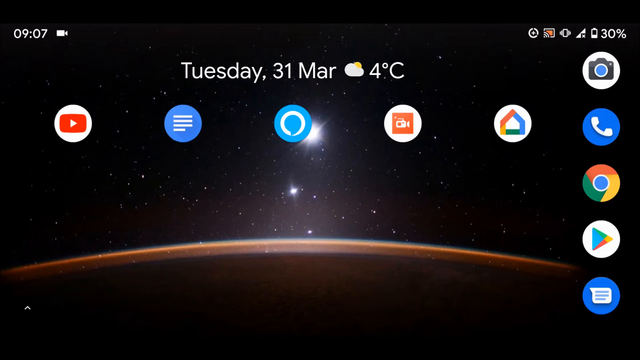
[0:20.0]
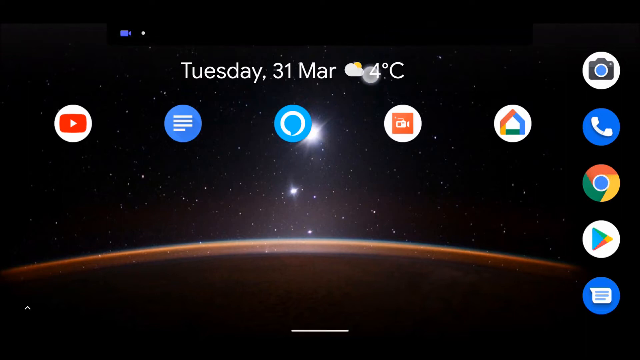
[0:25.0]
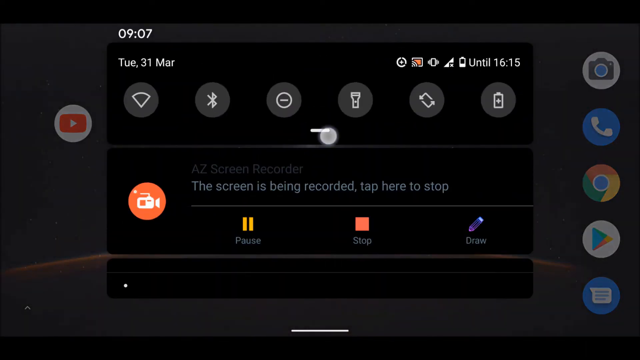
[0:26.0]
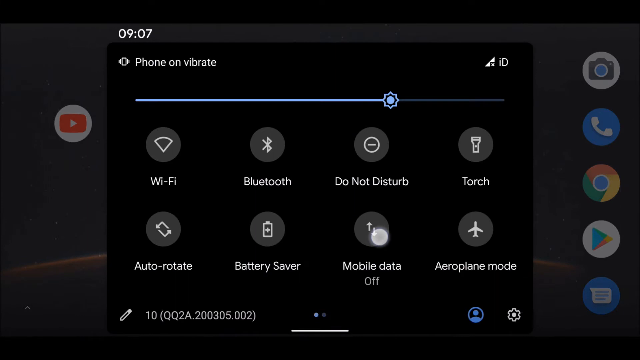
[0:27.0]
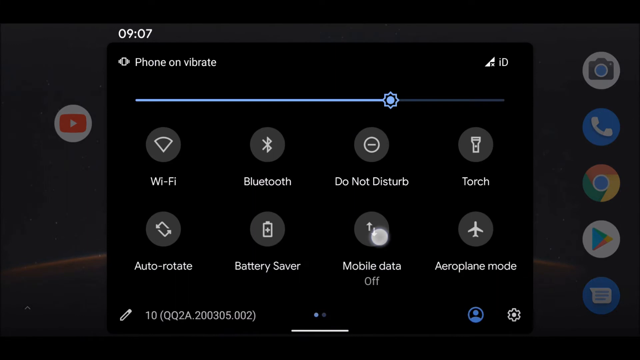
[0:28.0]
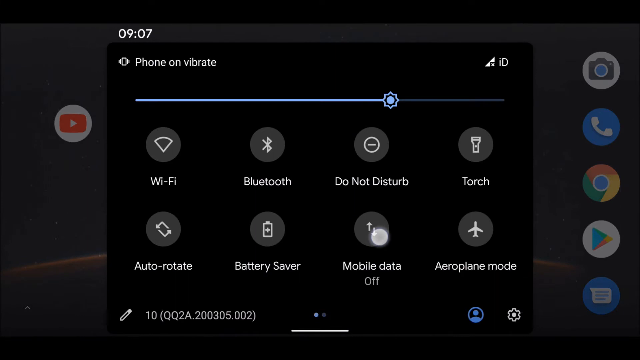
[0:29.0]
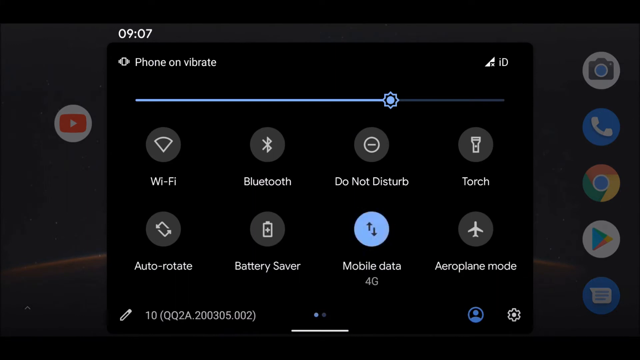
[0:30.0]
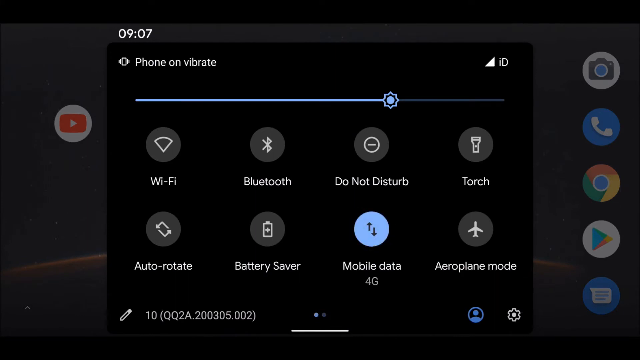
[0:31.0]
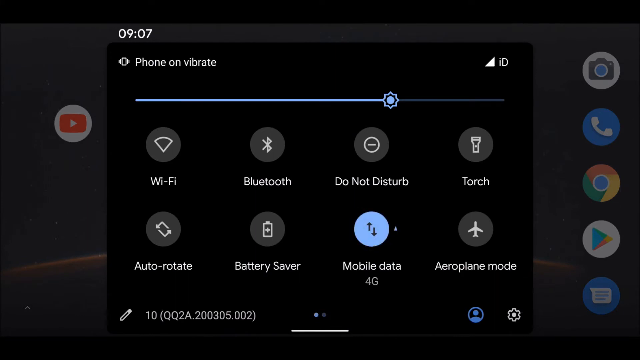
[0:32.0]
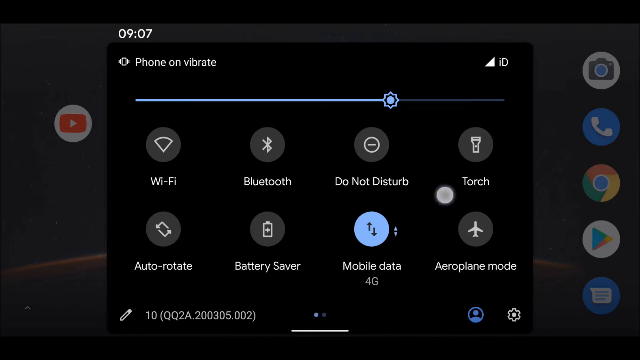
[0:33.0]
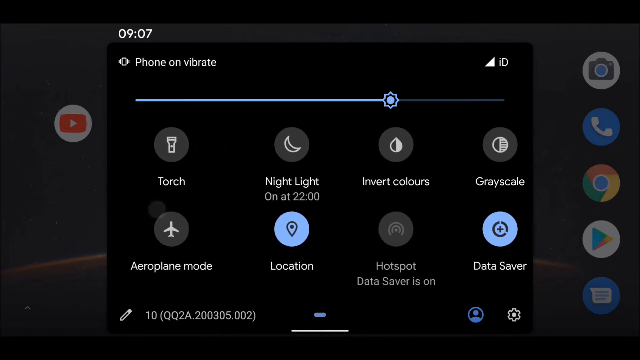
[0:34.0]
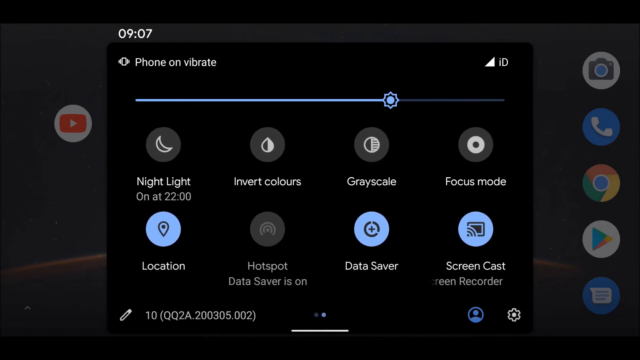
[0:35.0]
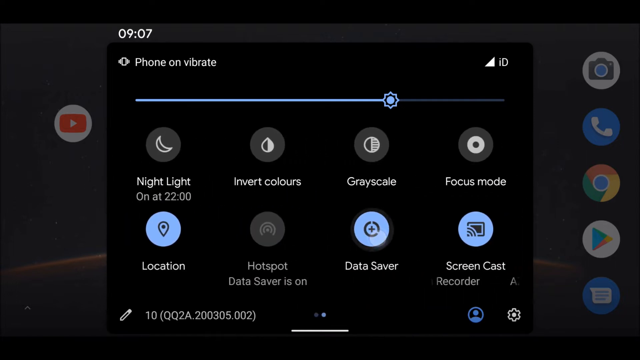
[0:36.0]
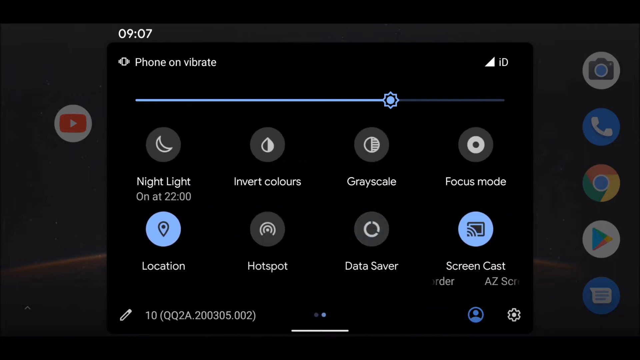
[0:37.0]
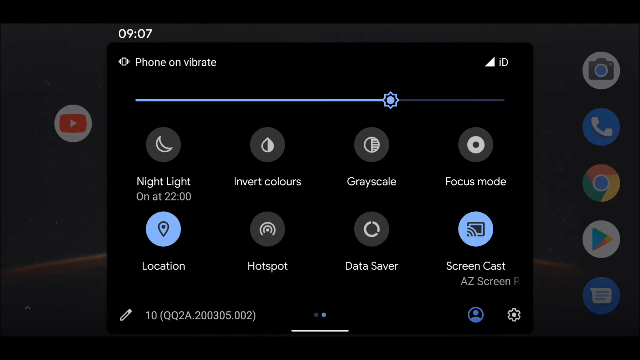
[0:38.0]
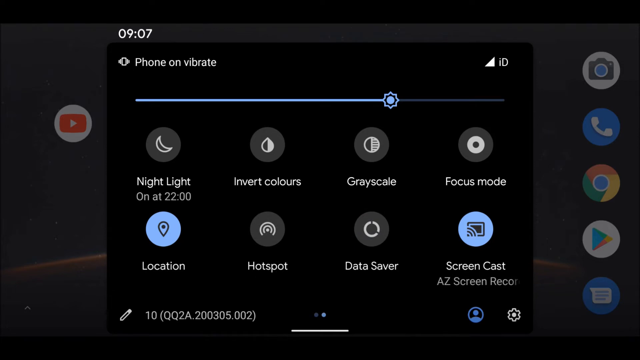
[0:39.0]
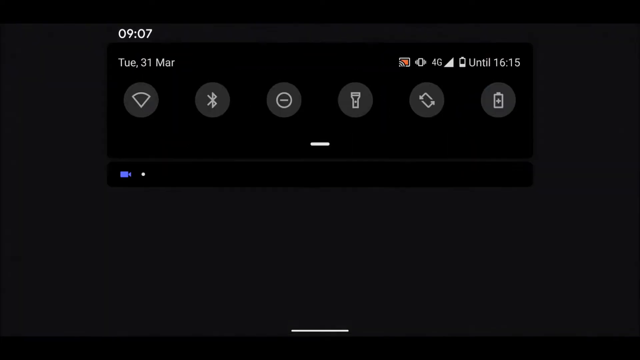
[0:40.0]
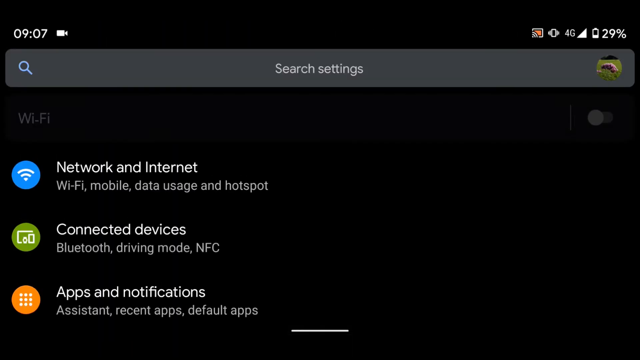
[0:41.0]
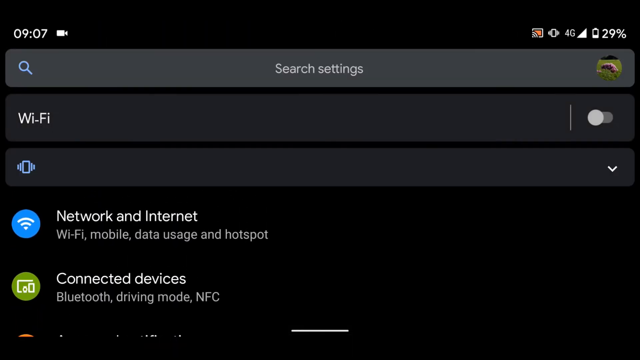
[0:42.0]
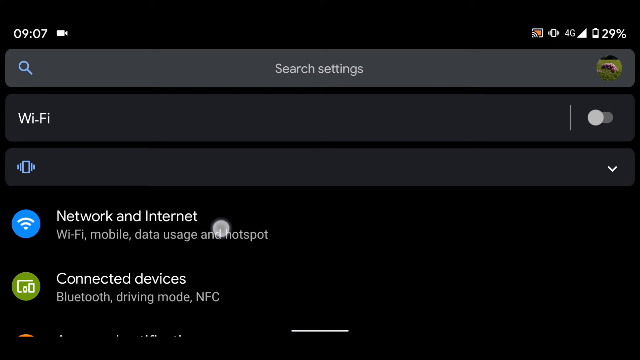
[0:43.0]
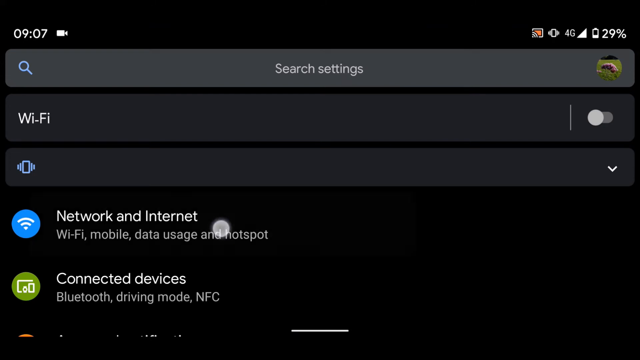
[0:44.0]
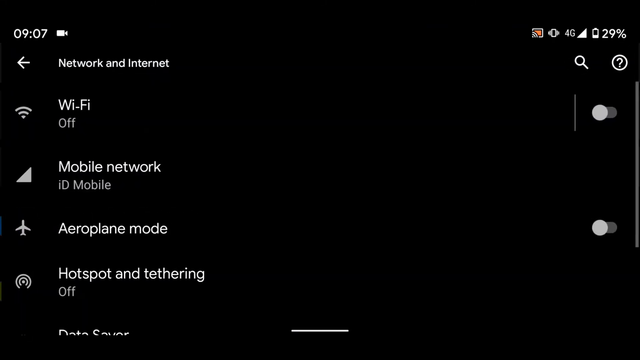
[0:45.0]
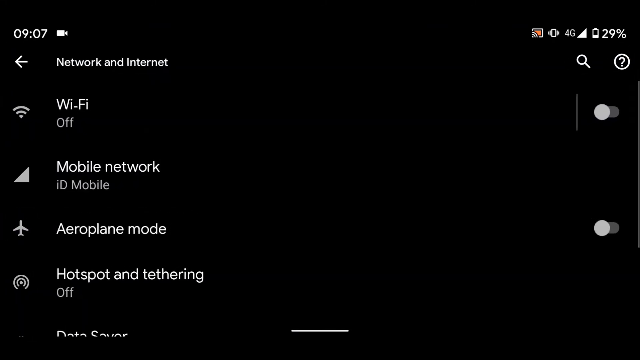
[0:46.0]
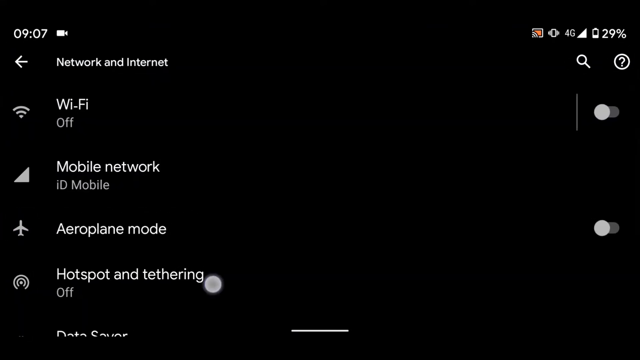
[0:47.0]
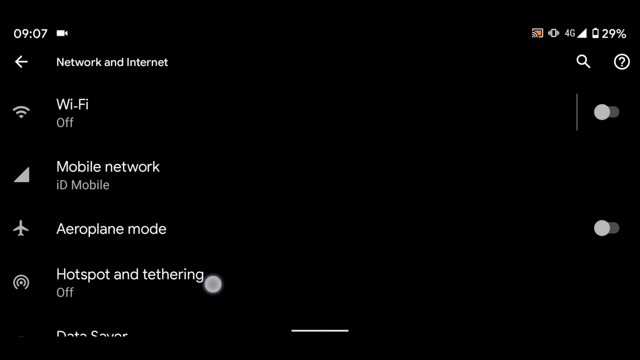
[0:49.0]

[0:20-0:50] The screen could be either a smartphone screen or a laptop. In the top right corner there is a battery image with "30%" next to it. In the top left corner the time reads "9.07", and to the right of it is a white camera image. In the middle the screen reads "Tuesday 31" and "MAR", with a cloud with the sun in the background and "four degrees Celsius". Below is a row of icons running left to right, seemingly about six of them; the first is YouTube and the last is an icon with a white phone receiver on a blue circle. Underneath are three more icons, with one more above.